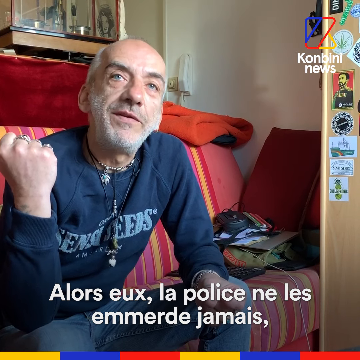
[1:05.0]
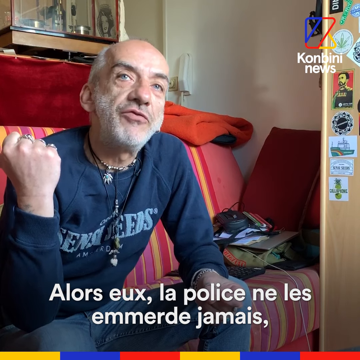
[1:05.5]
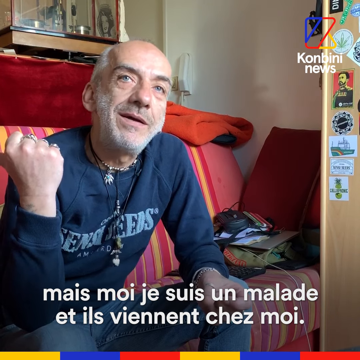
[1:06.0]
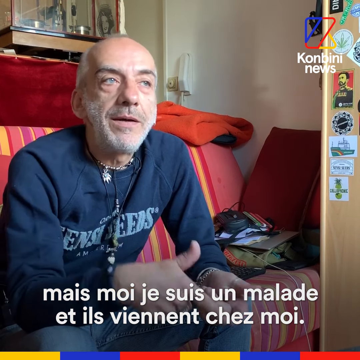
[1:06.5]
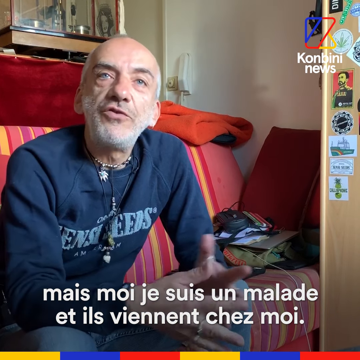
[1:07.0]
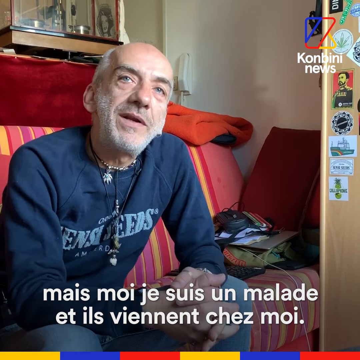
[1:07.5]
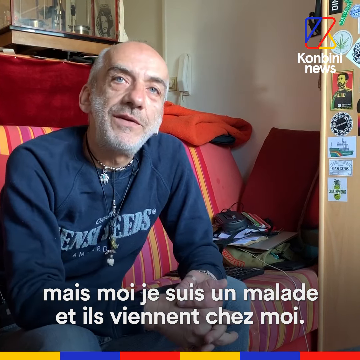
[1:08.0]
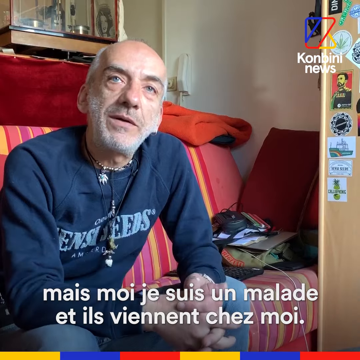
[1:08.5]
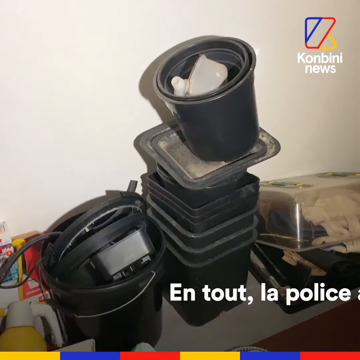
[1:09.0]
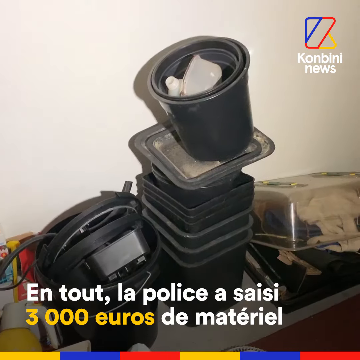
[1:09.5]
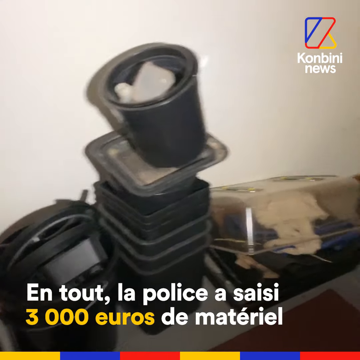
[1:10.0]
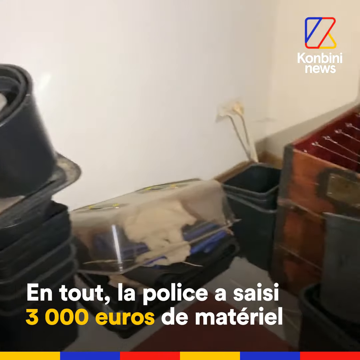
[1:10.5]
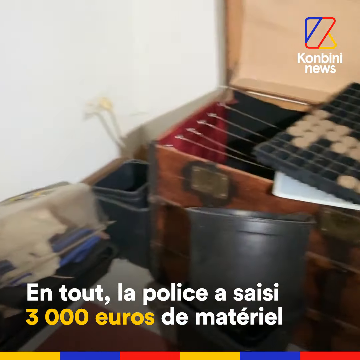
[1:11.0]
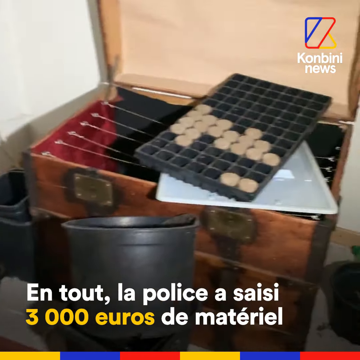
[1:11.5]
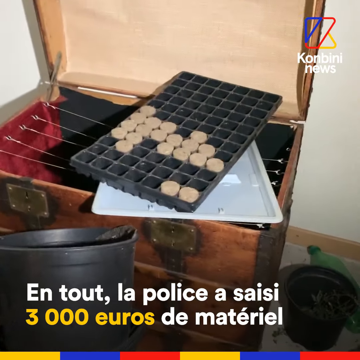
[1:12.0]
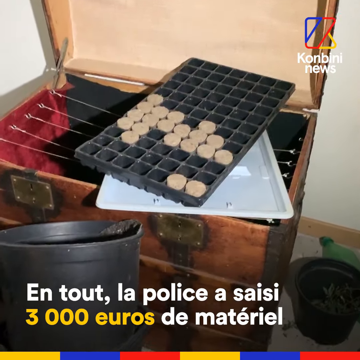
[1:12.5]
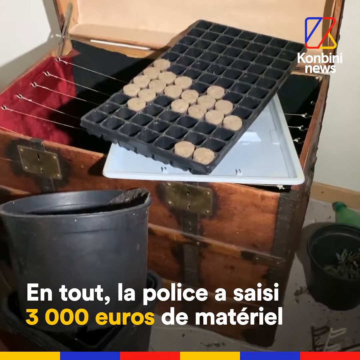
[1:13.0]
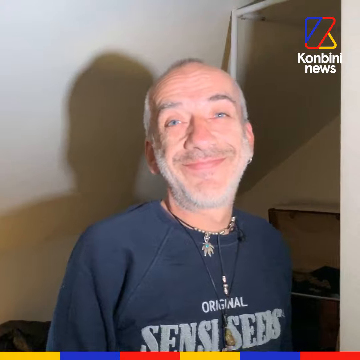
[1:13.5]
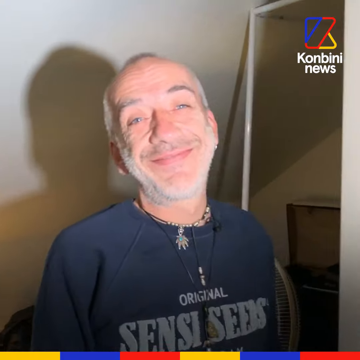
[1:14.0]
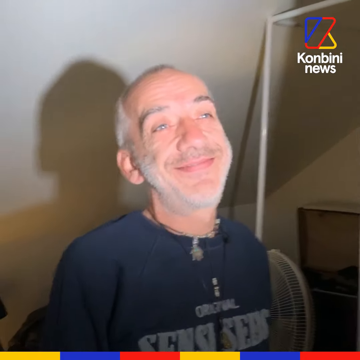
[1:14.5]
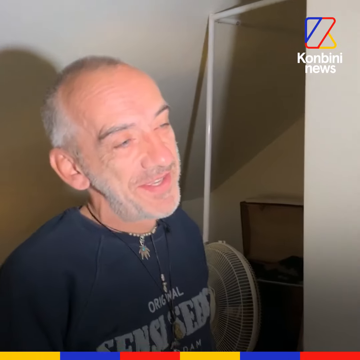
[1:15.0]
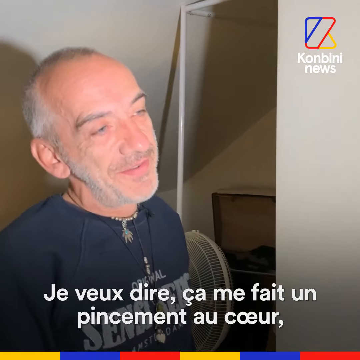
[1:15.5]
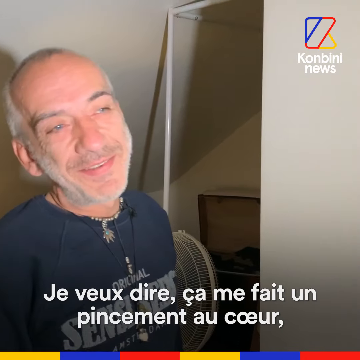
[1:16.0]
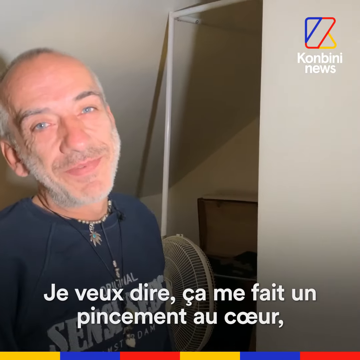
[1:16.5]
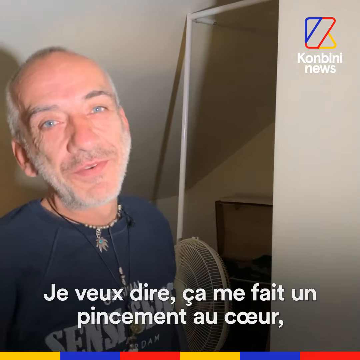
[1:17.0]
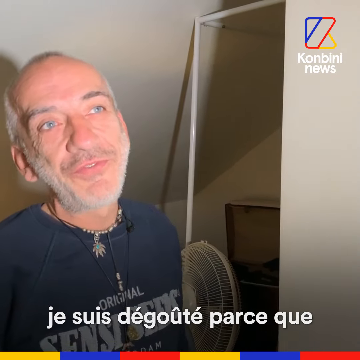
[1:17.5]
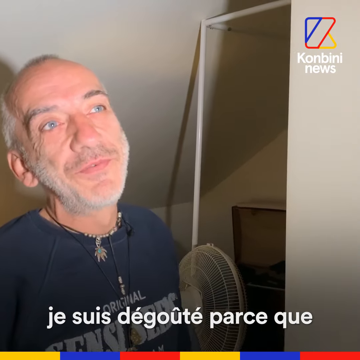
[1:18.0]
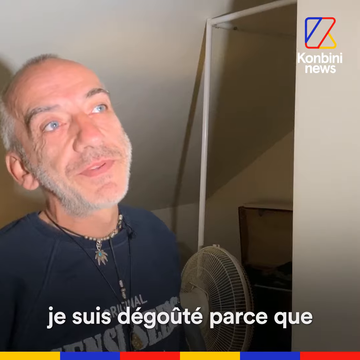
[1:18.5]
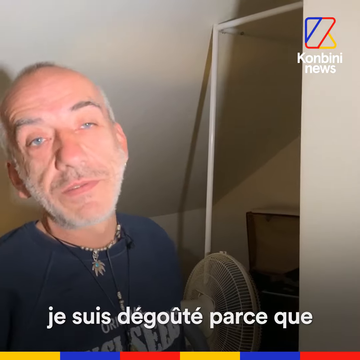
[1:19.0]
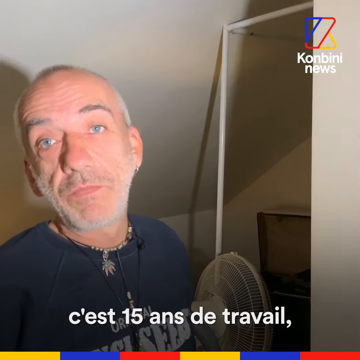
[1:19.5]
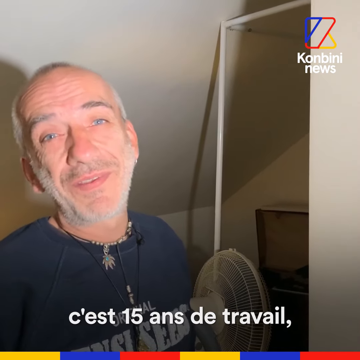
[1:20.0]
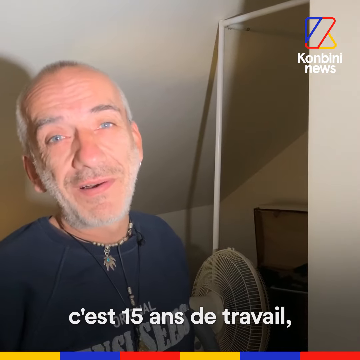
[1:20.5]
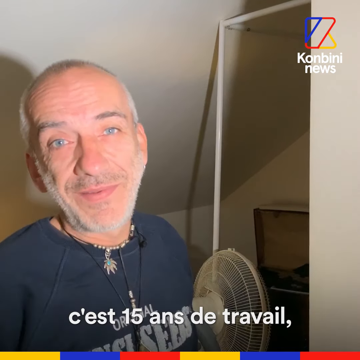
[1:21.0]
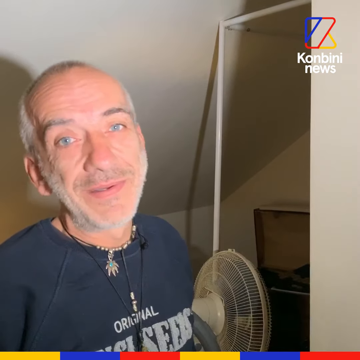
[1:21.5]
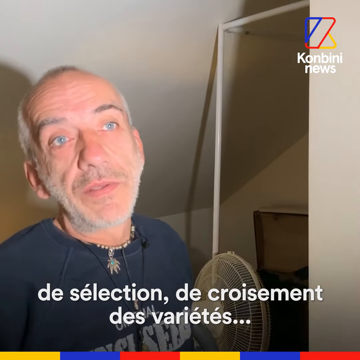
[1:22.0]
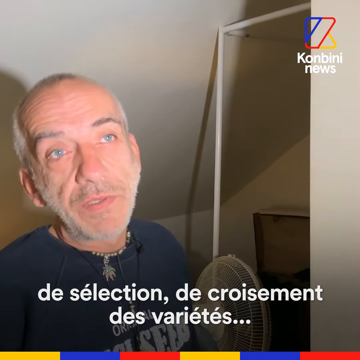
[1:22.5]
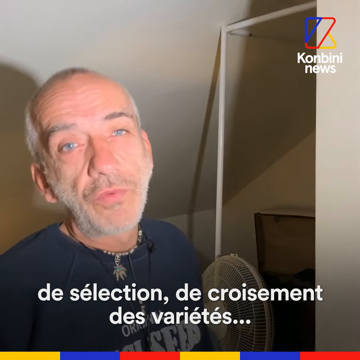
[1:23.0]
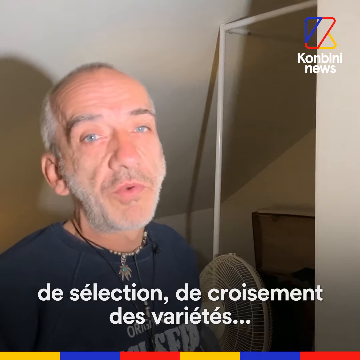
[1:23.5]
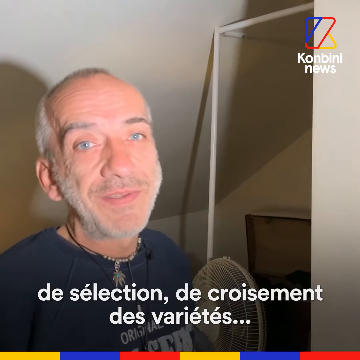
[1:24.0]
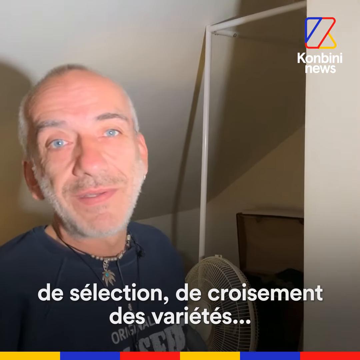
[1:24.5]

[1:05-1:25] The setup is the same, with the two black bands on either side. He shows what else is in the closet: what looks like stacked black plastic pots of the kind plants are sold in, and then wood objects stacked on top of each other. He may have been growing pot in the closet. He smiles kind of smugly with the light in his face and seems kind of amused, apparently explaining what he has in his closet. The artificial light showing the room is very bright and stark. There are several black buckets in the room that used to hold plants, now empty, some stacked and some on the floor. Then the scene returns to the sofa, where he seems more relaxed and chatting.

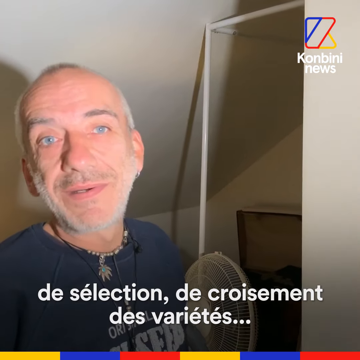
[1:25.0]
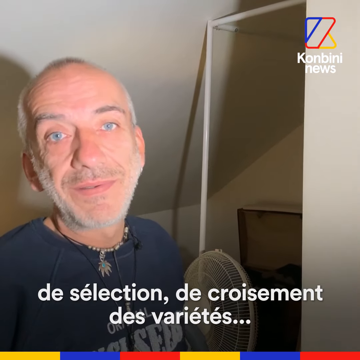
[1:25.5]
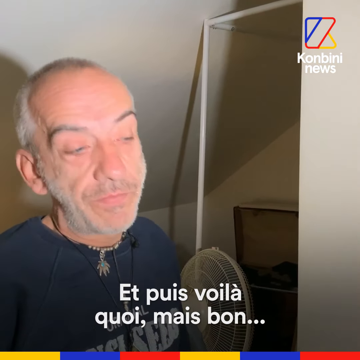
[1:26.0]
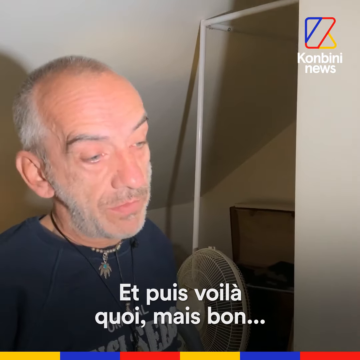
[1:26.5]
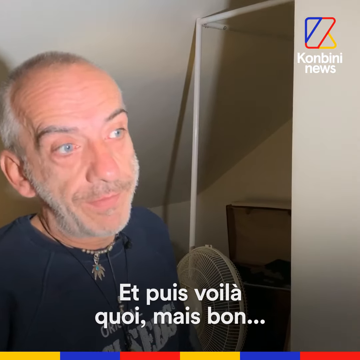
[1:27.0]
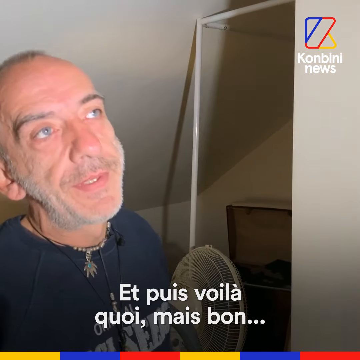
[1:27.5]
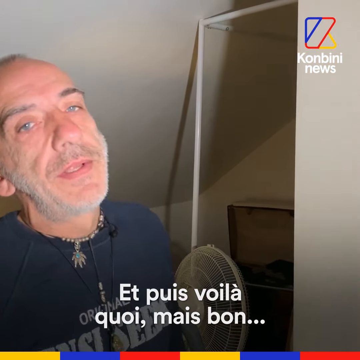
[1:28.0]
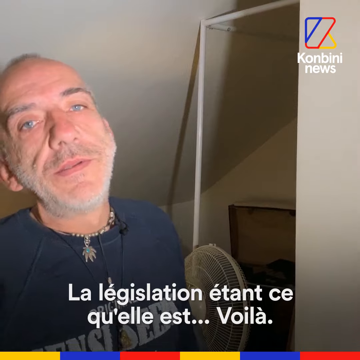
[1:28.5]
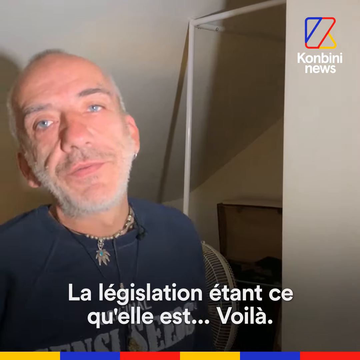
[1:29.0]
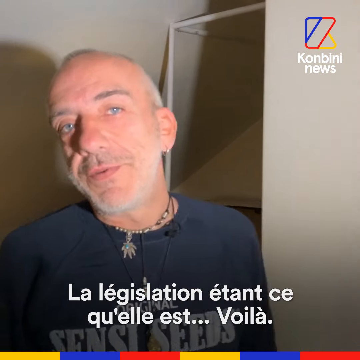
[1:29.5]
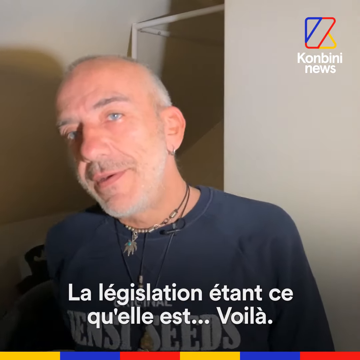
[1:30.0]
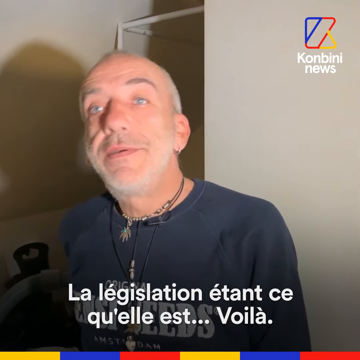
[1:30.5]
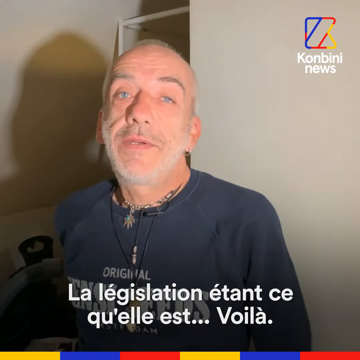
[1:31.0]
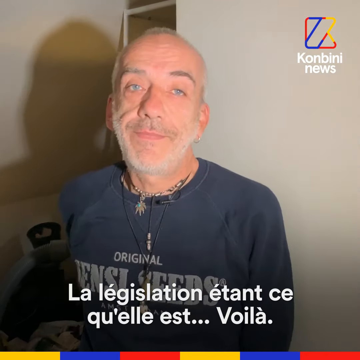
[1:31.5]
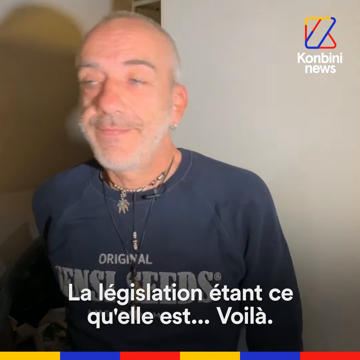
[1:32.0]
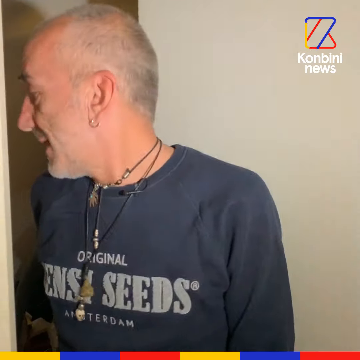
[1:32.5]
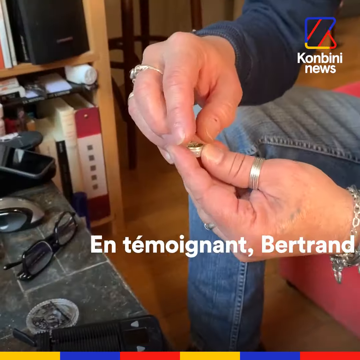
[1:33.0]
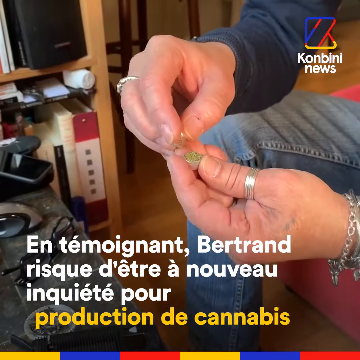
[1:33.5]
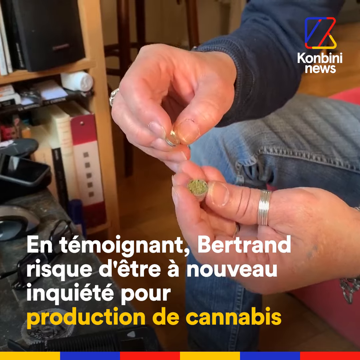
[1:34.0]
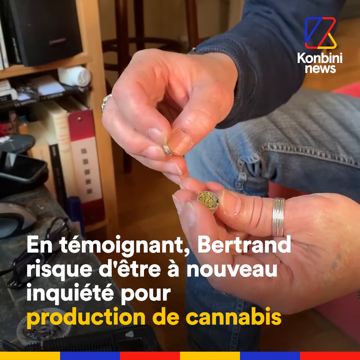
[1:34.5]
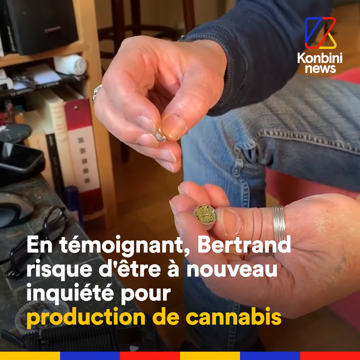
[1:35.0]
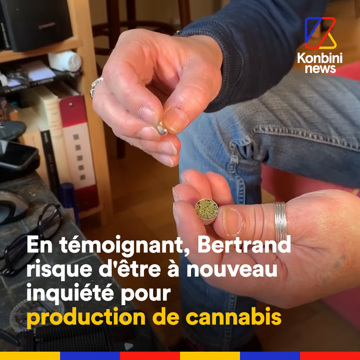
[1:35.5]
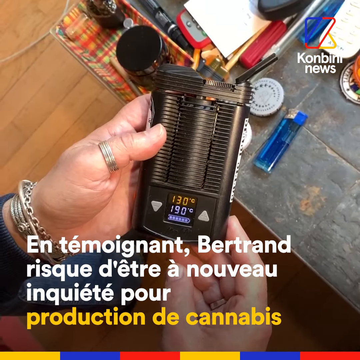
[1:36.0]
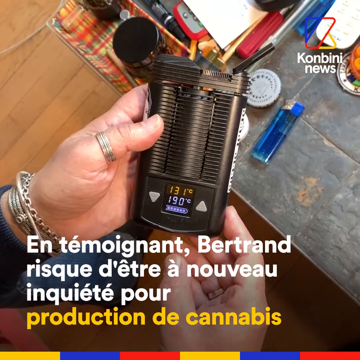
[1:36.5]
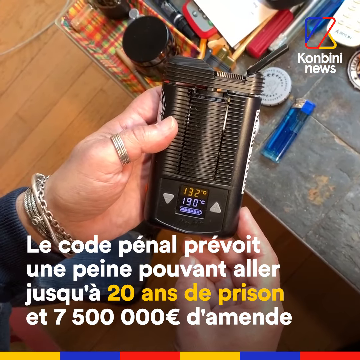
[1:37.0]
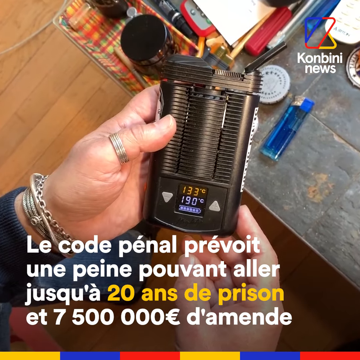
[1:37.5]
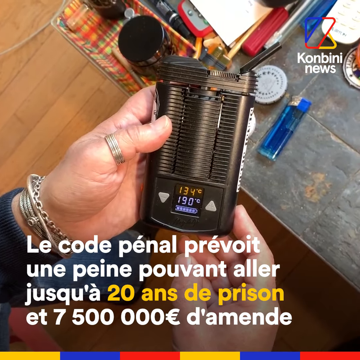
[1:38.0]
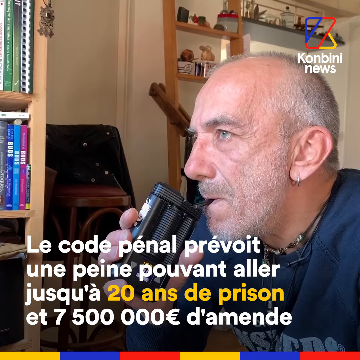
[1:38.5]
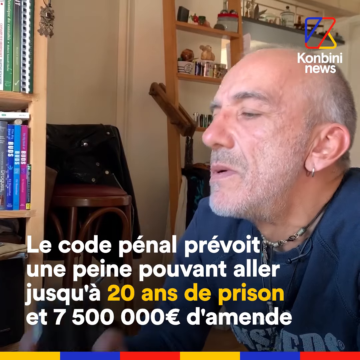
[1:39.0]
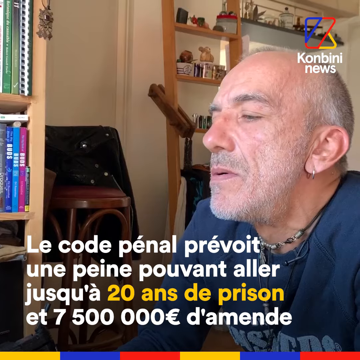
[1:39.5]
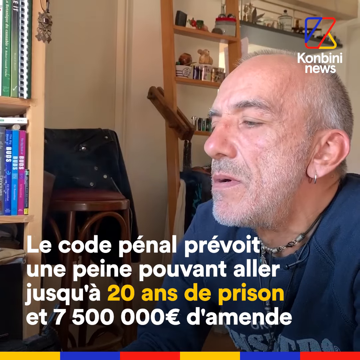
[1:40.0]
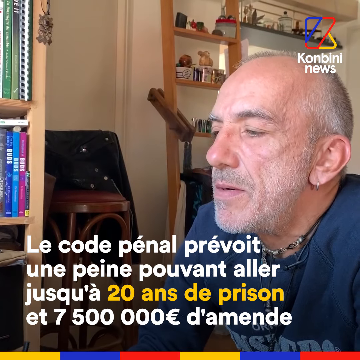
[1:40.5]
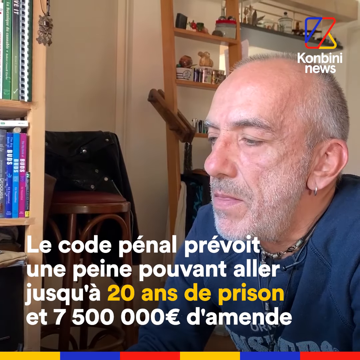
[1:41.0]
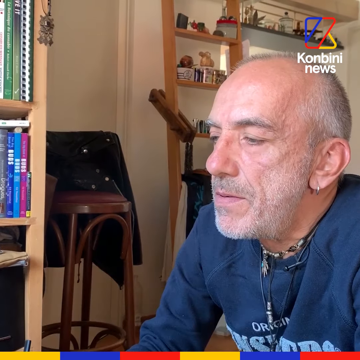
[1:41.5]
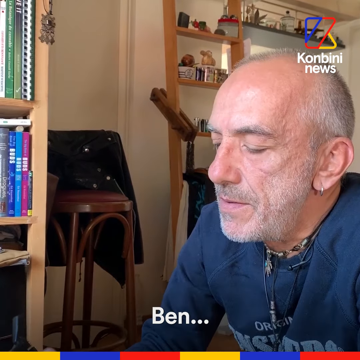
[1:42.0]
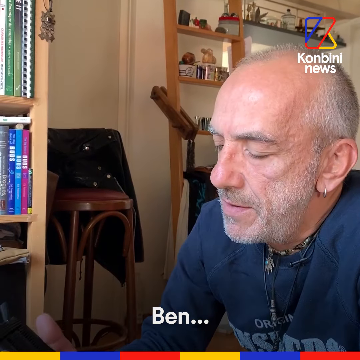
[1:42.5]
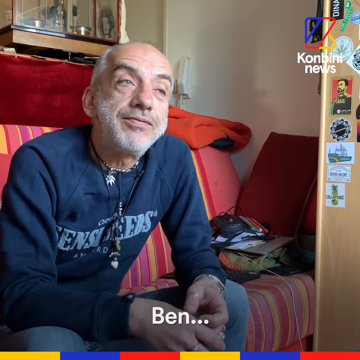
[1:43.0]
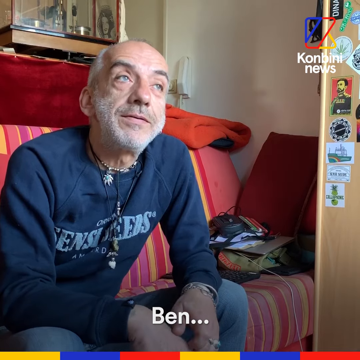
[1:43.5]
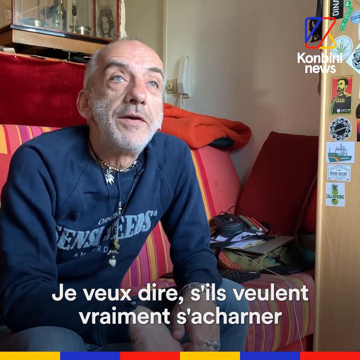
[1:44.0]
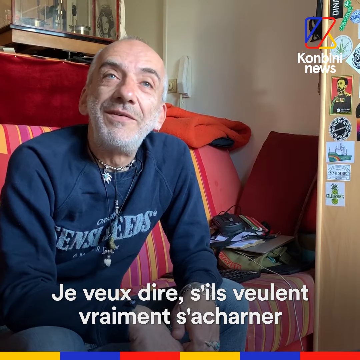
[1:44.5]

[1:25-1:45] The layout is the same. There is a little more of him talking in the room, then the camera comes out of the room and he closes the door. He shows a small metal thing with ground-up green leaves in it, and then a black gauge that seems to have two little metal parts, with the other part possibly measuring how full it is; it could be part of his pipe. He takes a long drag and exhales the smoke. He holds something small between his index finger and thumb, inhales and then exhales, with very little smoke coming out of his mouth. He seems very relaxed and comfortable doing this, as if he has done it several times and it is part of his routine.